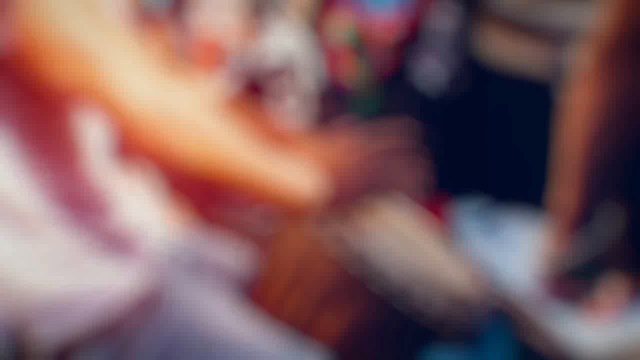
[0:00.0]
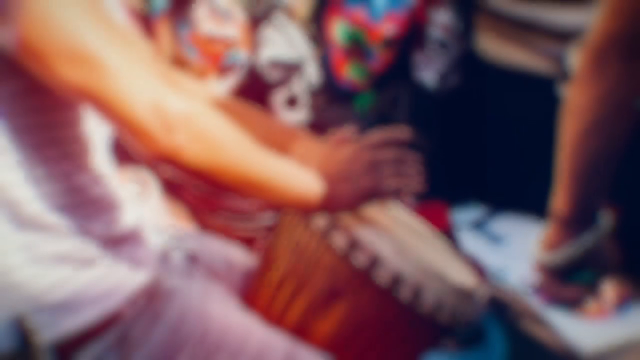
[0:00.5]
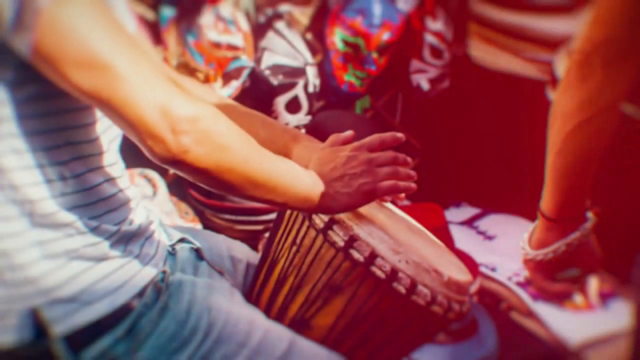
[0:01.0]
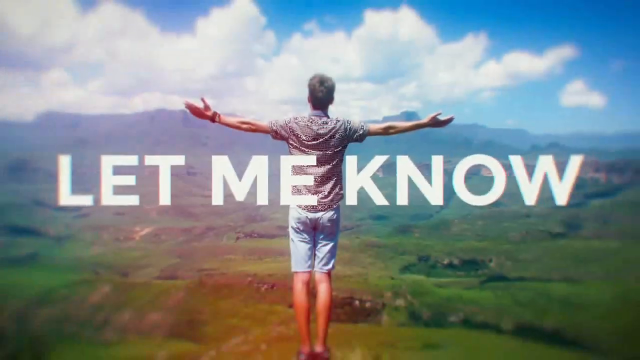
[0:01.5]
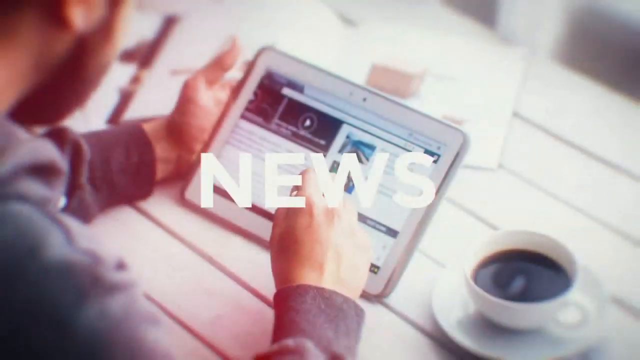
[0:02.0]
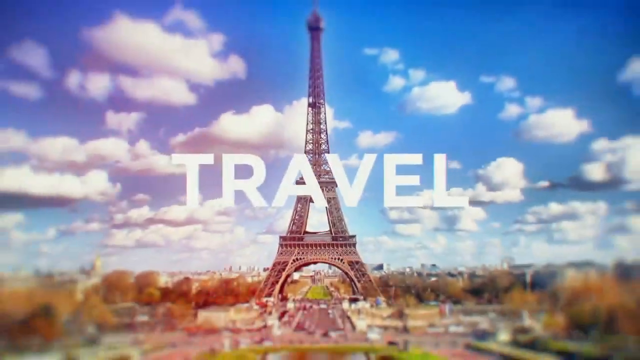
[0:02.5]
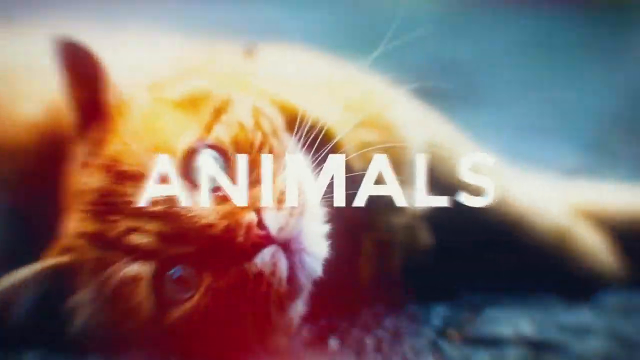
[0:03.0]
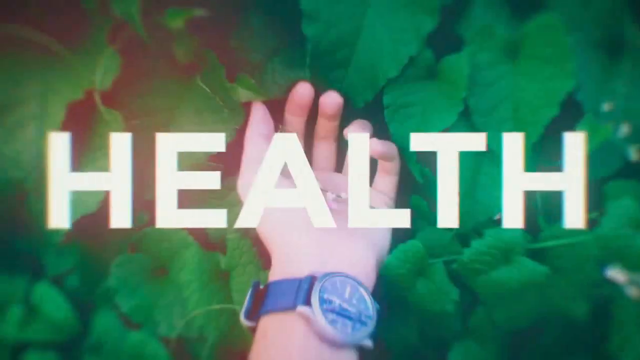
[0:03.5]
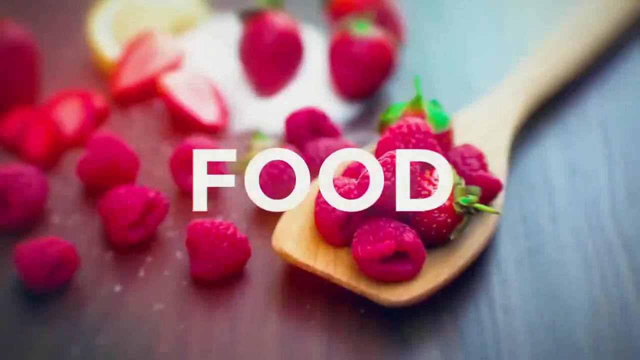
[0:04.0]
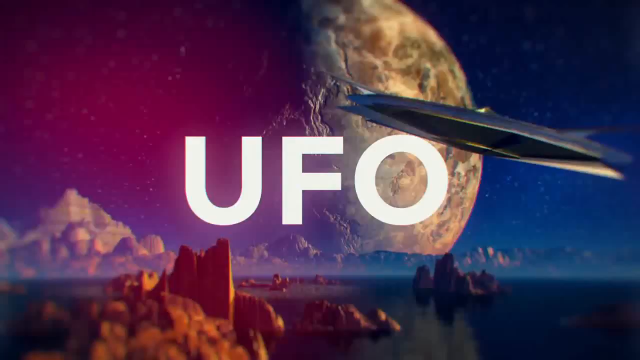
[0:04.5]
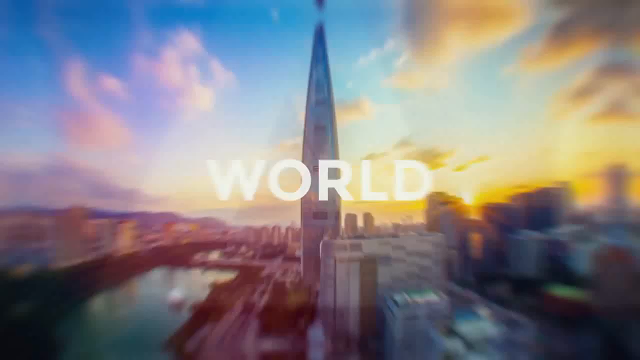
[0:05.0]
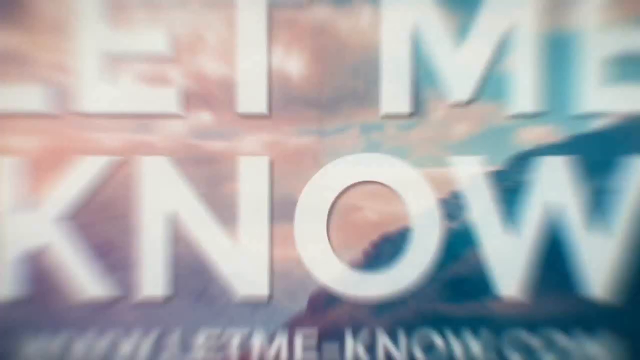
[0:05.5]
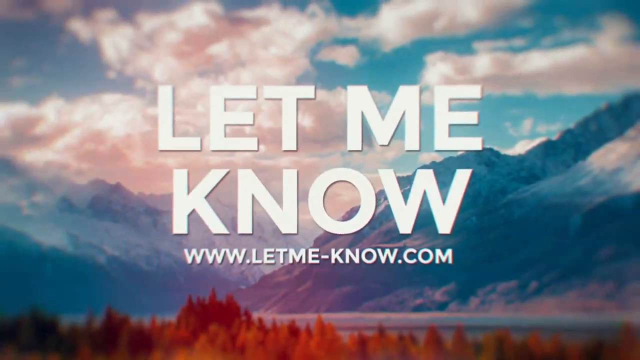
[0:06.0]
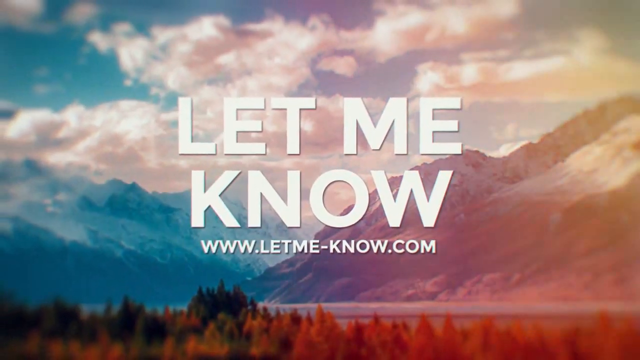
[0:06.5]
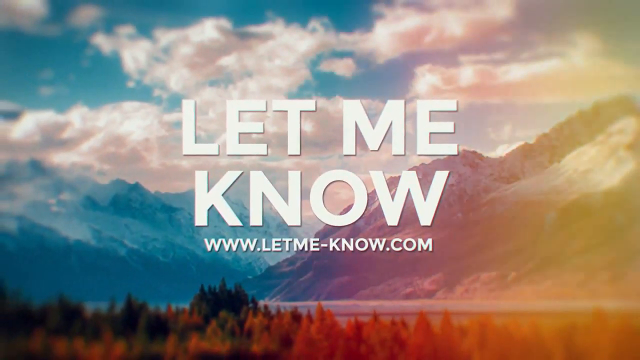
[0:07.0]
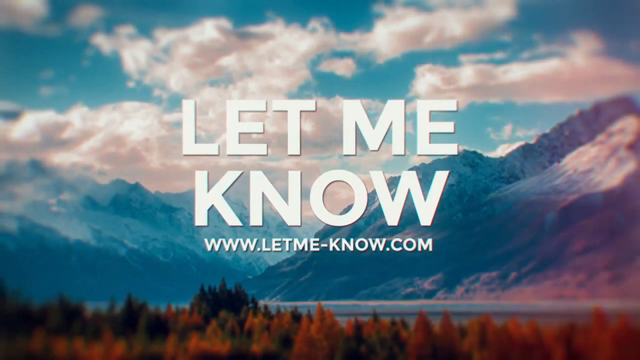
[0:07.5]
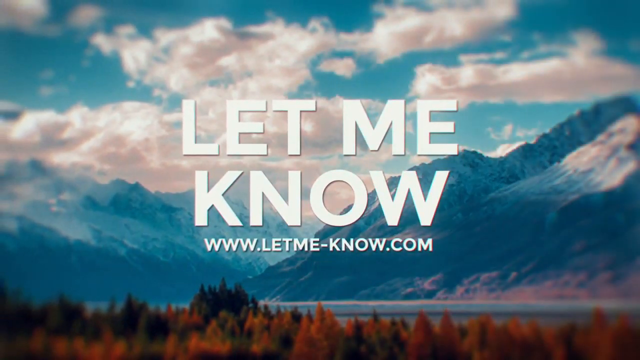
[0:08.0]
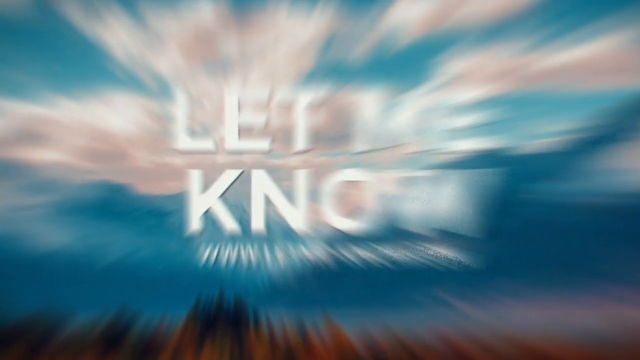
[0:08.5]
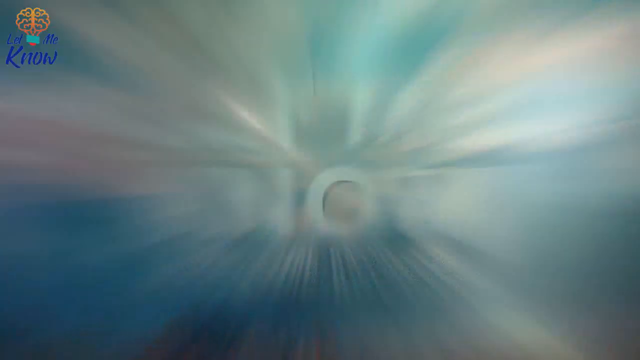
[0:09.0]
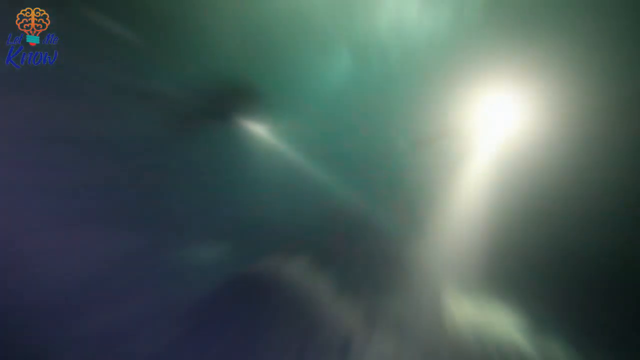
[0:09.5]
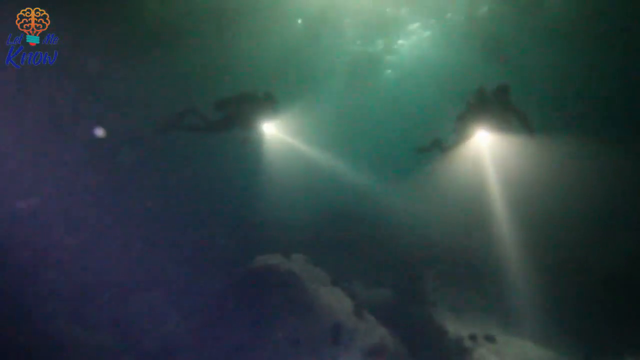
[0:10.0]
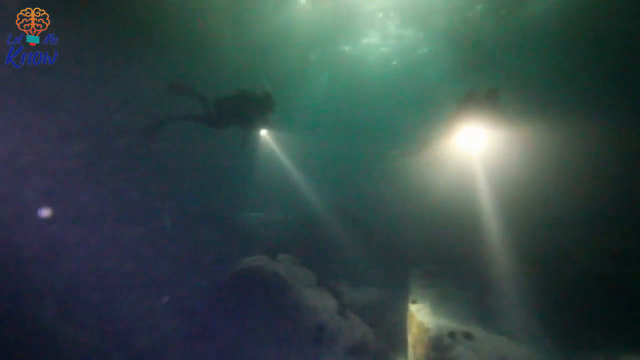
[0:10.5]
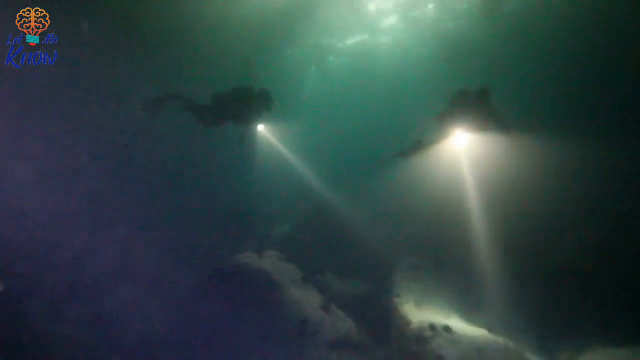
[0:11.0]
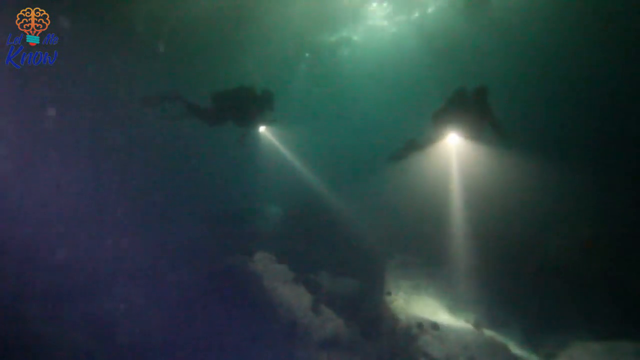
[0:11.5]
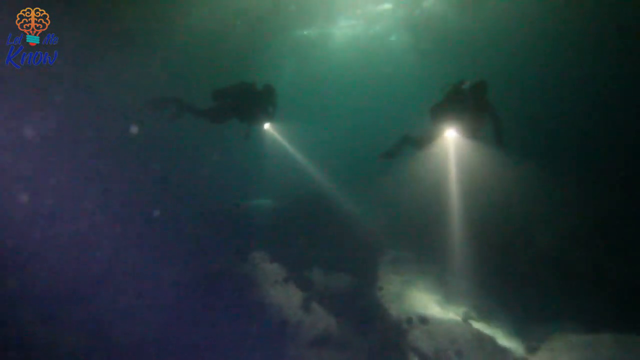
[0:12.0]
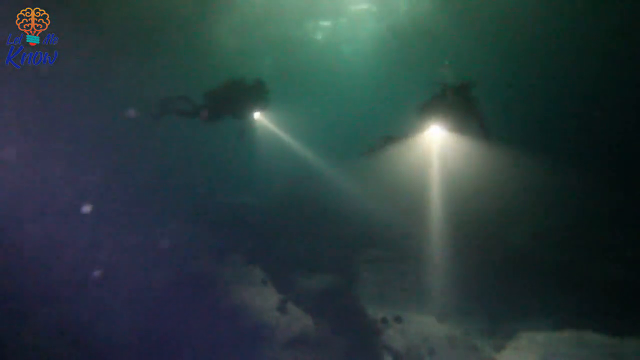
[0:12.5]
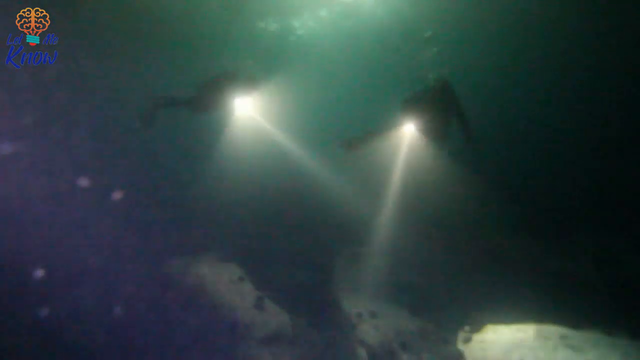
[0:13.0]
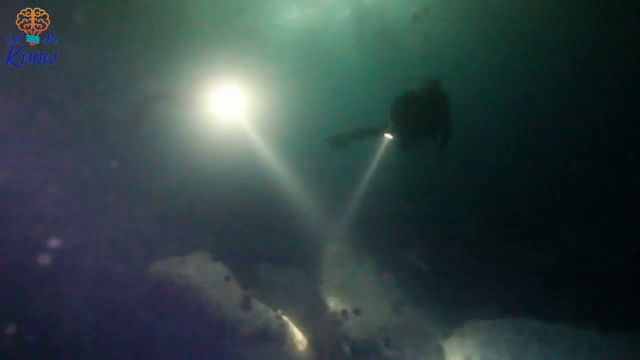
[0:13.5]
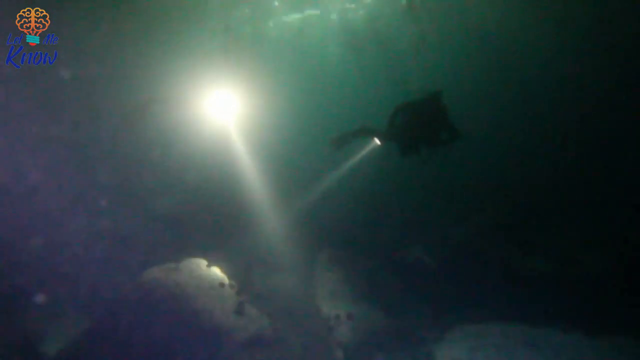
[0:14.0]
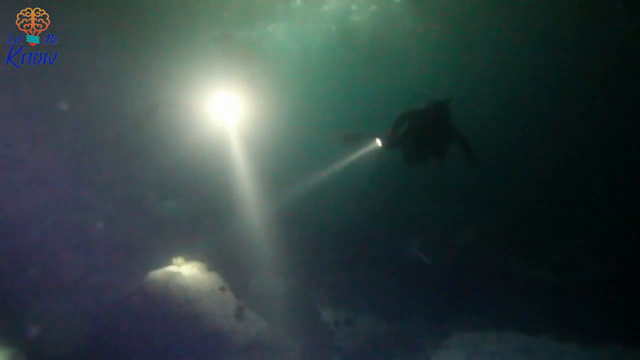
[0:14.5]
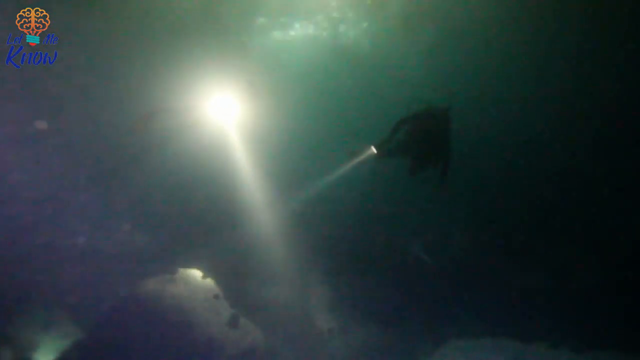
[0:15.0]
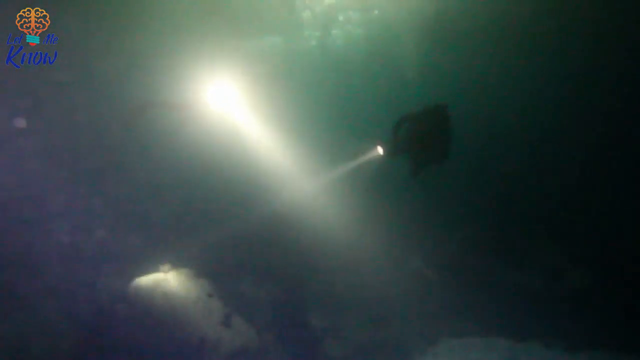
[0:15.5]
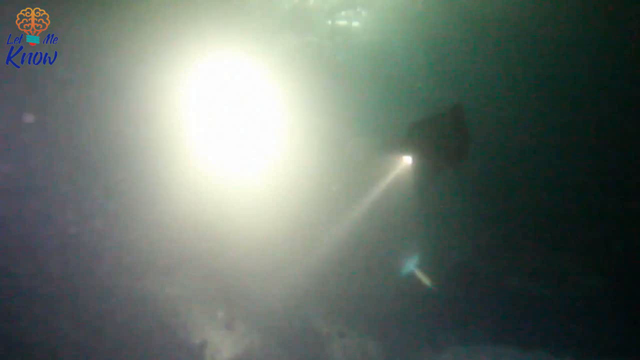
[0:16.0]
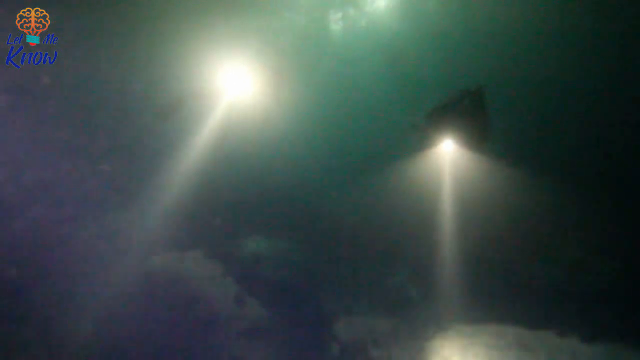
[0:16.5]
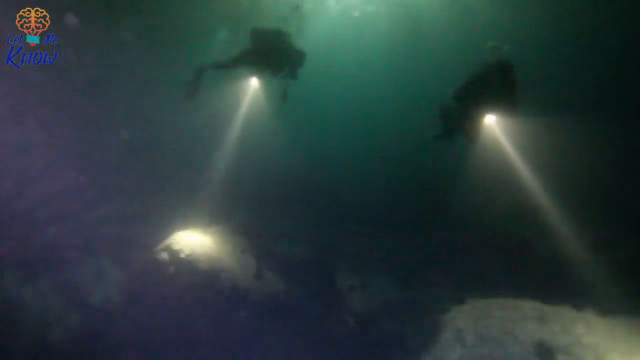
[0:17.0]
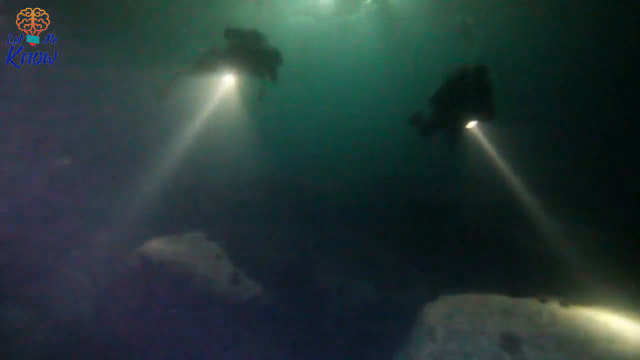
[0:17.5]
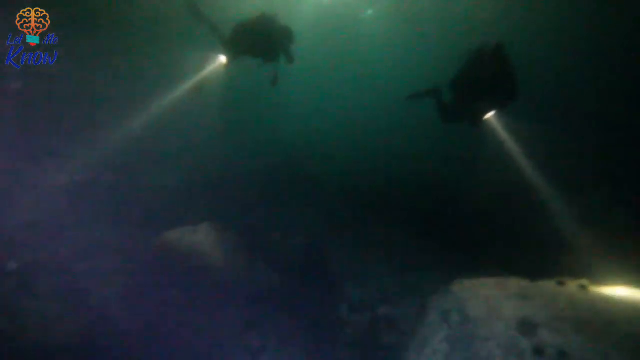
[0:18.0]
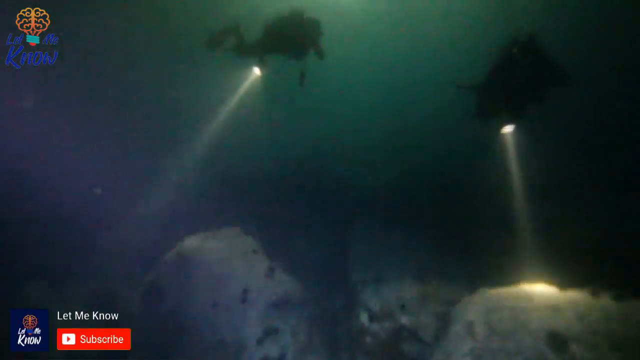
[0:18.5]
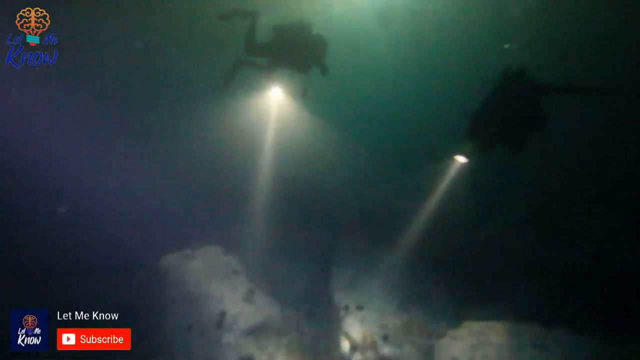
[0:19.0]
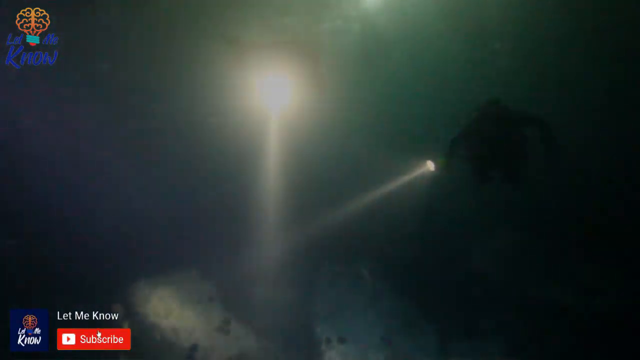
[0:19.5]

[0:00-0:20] A fast-paced sequence of slides opens the video, flashing words such as "let me know," "news," "travel," "animals," "history," "UFO" and "space." The thumbnail looks somewhat unfocused. After the intro, divers search the deep with flashlights in a fairly dark setting, looking over the bottom of the sea. They wear scuba flippers.